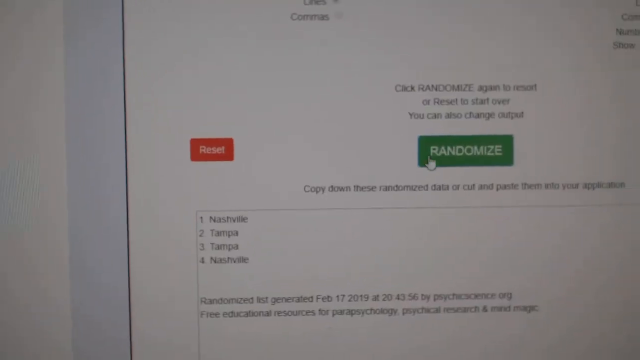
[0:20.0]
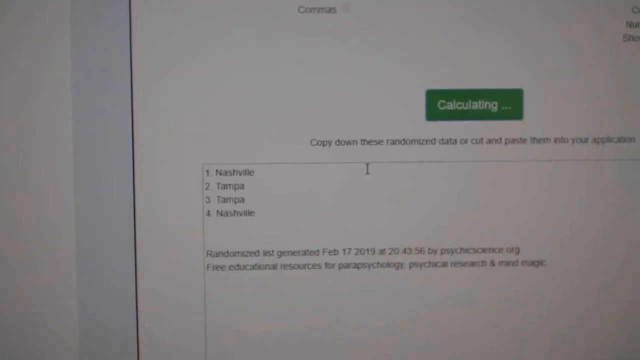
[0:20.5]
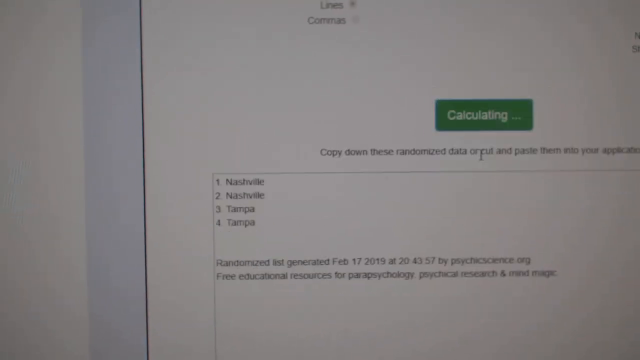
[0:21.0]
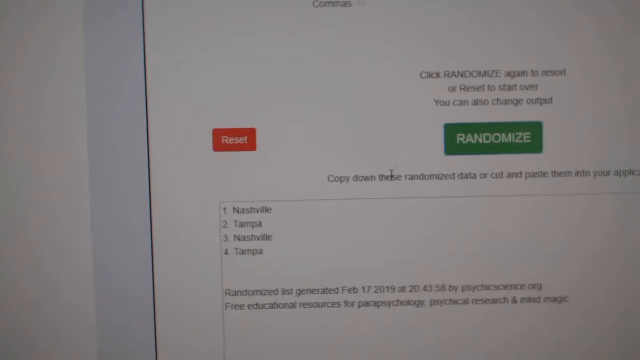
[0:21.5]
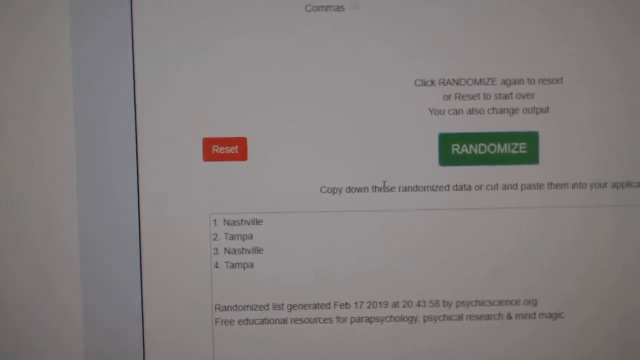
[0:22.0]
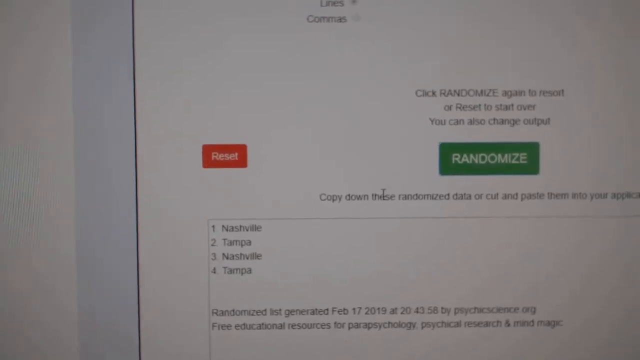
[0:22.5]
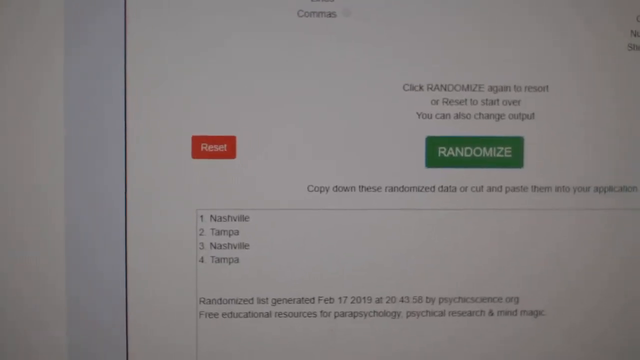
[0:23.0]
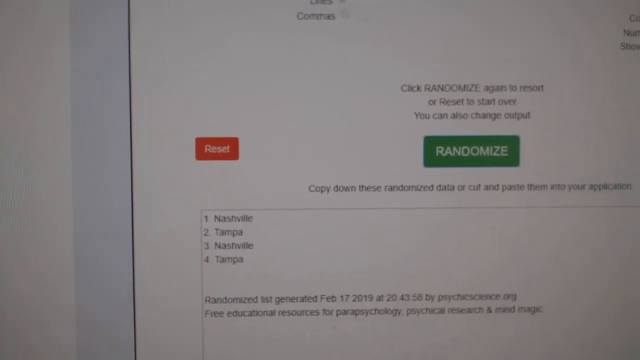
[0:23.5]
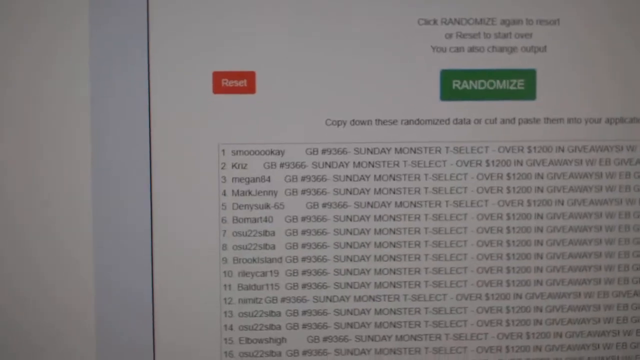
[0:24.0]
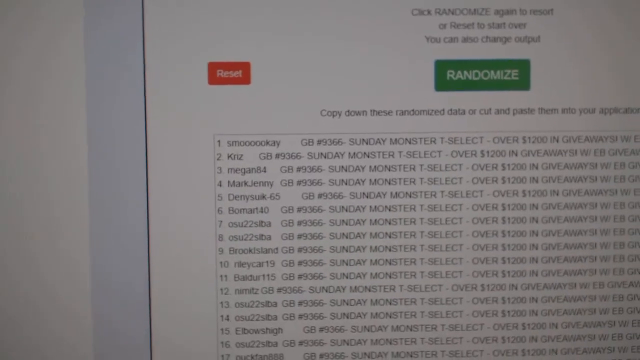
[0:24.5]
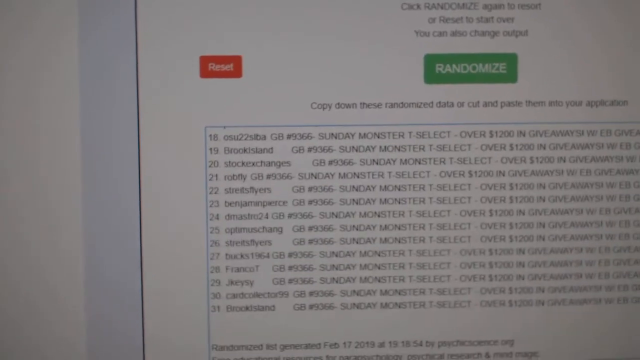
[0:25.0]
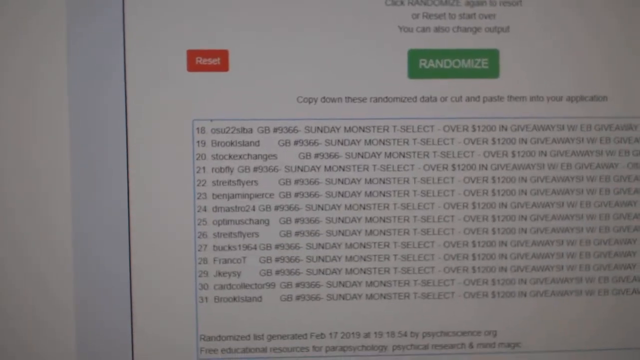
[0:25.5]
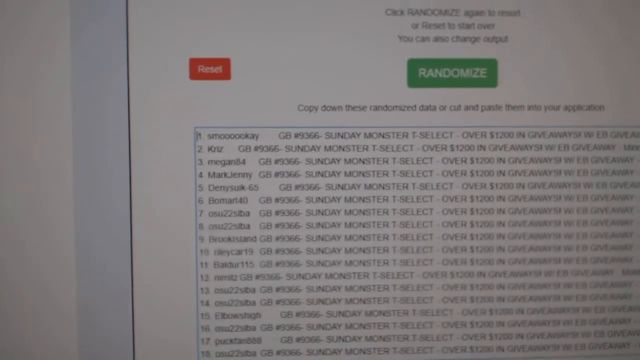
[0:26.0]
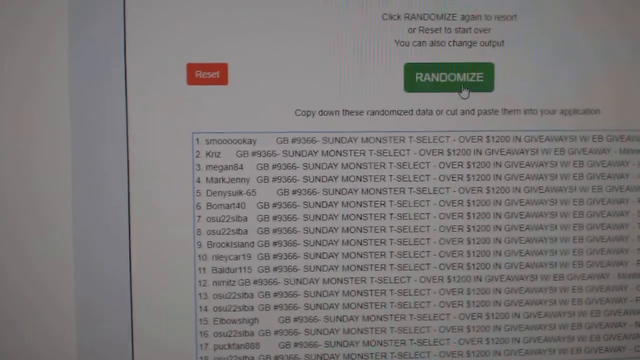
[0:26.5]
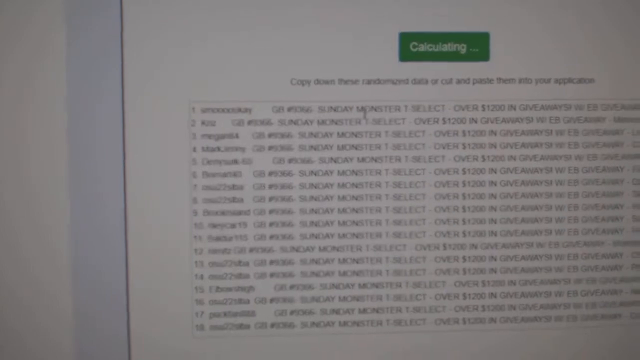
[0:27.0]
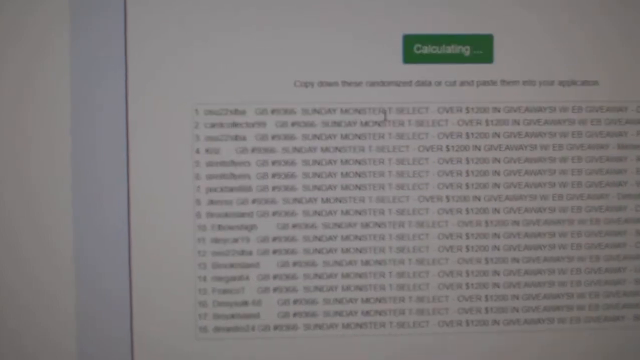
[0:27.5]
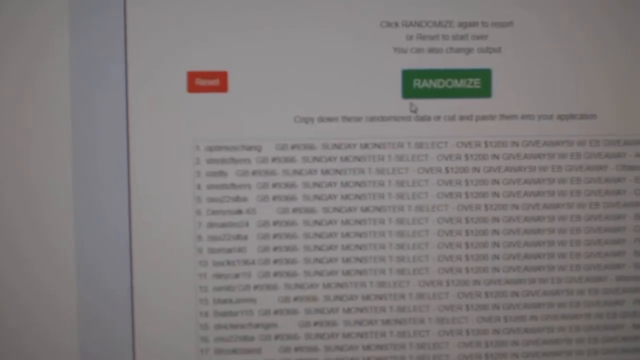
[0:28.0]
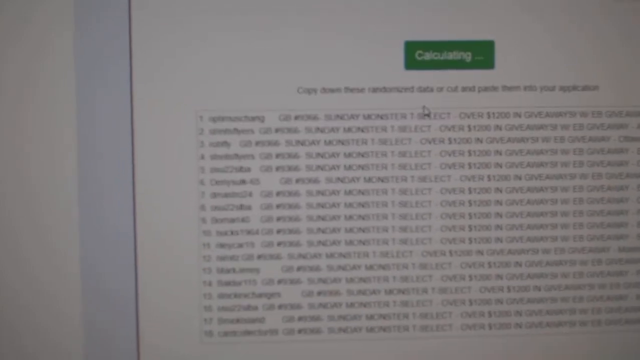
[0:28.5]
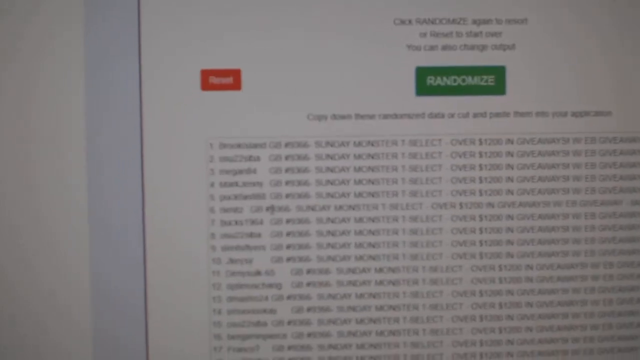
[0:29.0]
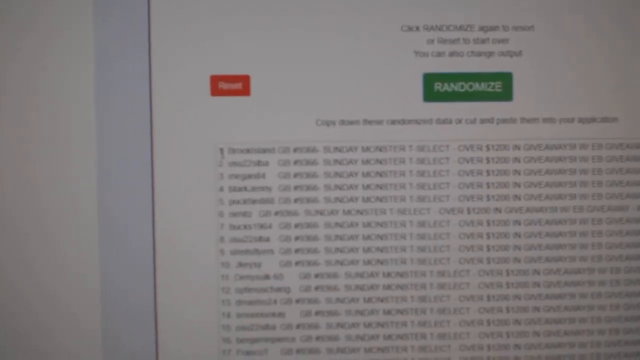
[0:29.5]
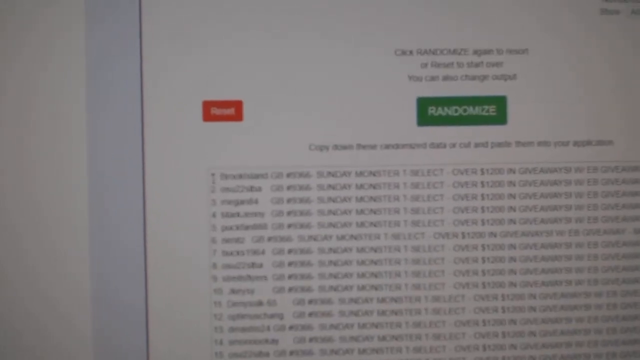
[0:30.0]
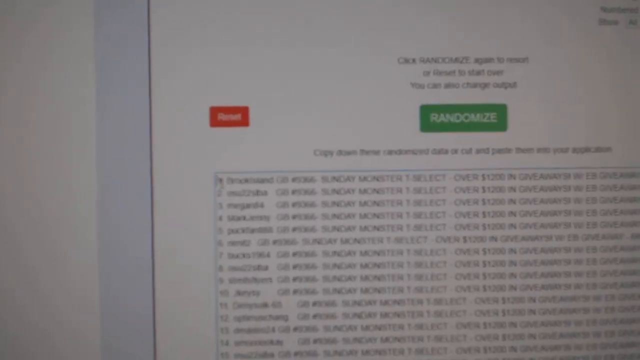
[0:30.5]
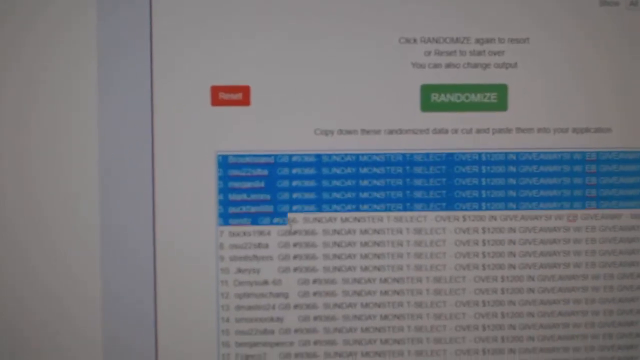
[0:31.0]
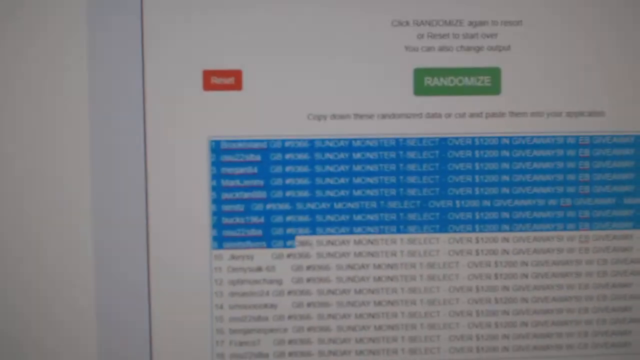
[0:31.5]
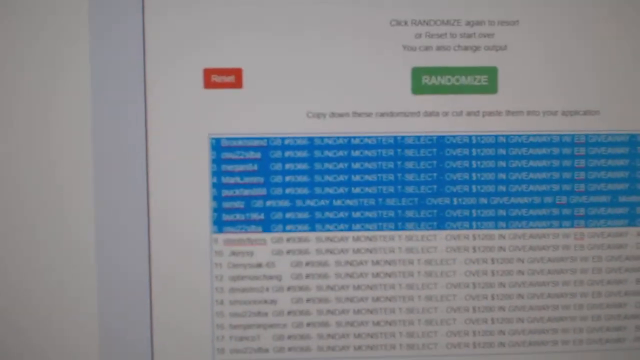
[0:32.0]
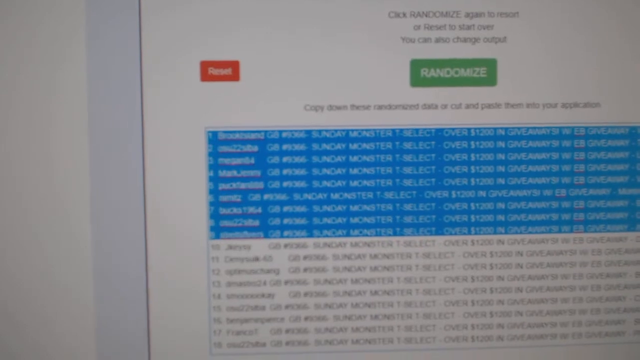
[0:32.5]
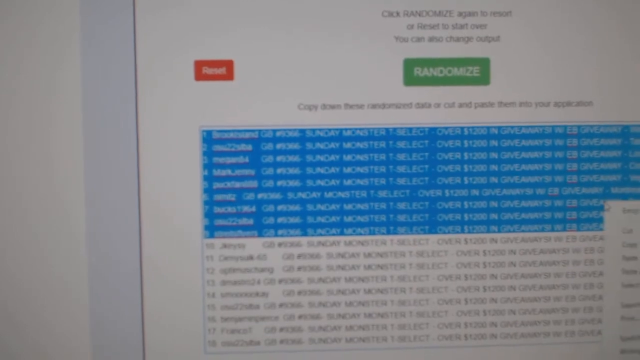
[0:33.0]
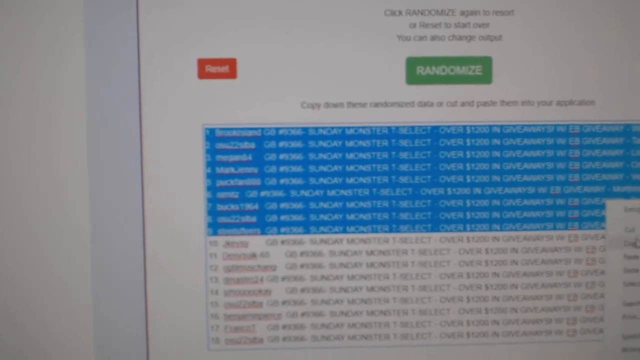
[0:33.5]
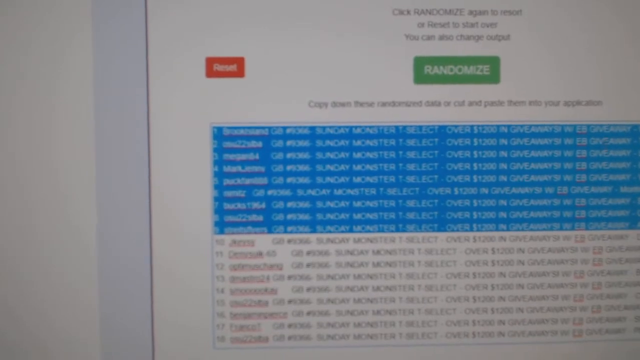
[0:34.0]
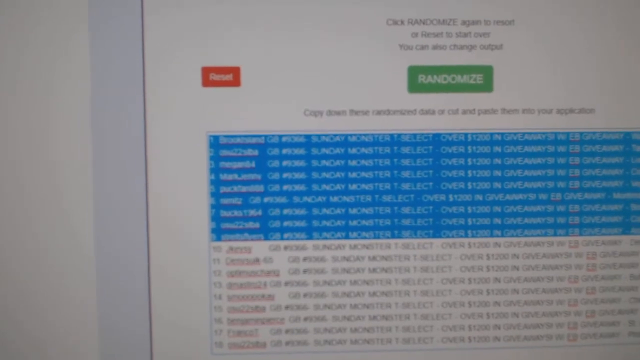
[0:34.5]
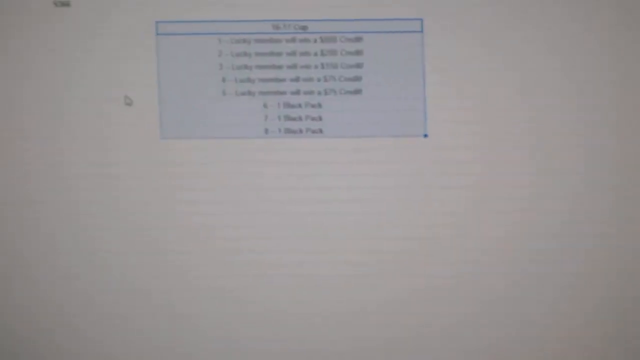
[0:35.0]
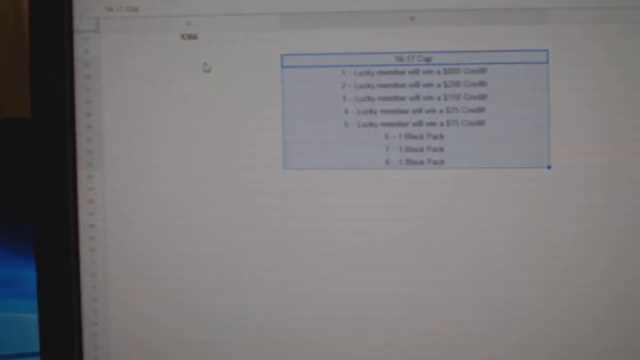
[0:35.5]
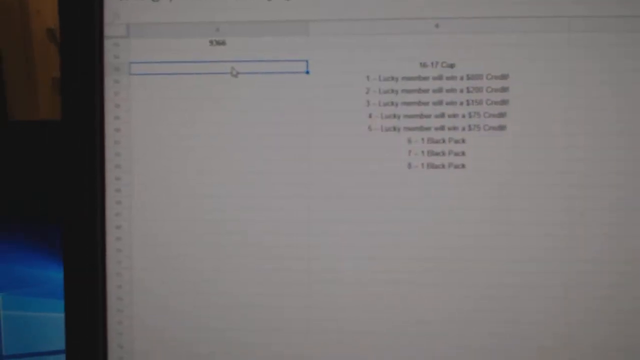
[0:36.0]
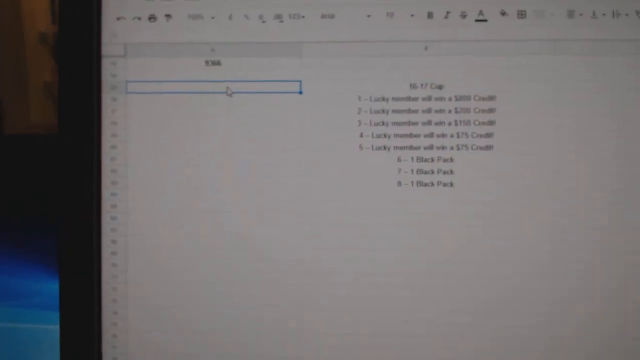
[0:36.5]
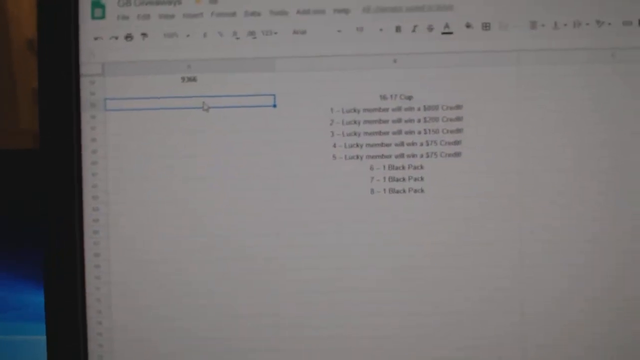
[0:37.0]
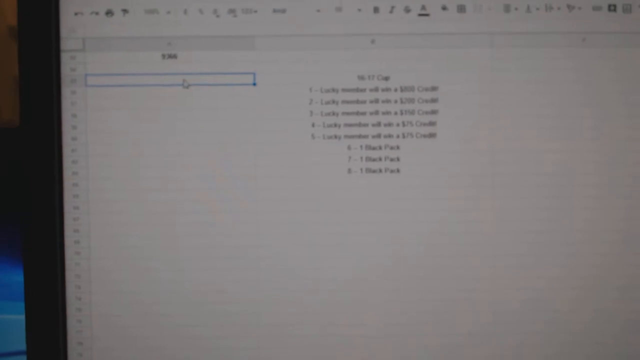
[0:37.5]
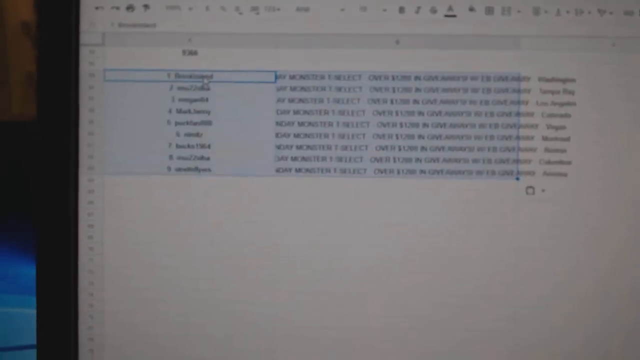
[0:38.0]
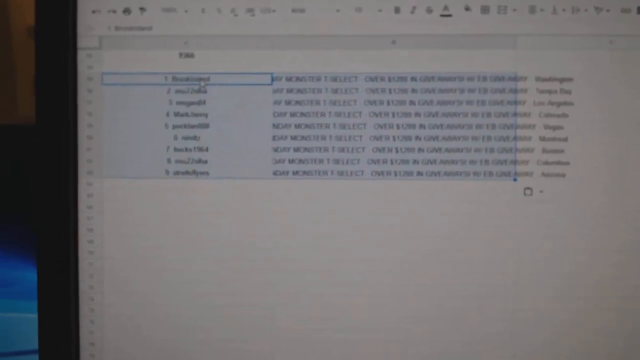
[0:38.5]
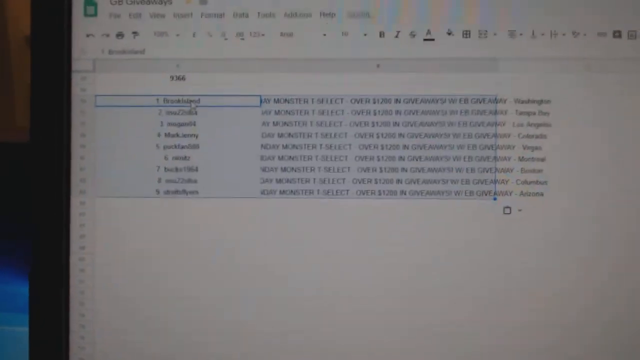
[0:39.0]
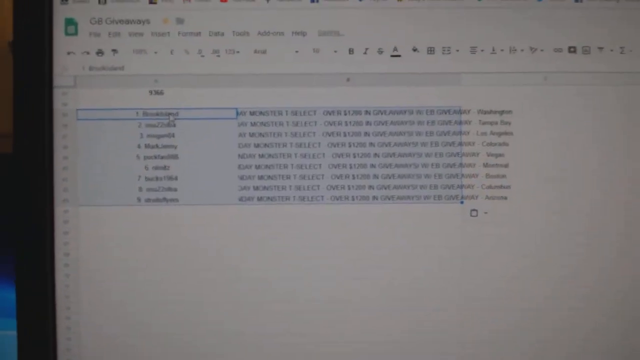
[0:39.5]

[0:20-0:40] The user keeps hitting the randomize button, and the Nashville and Tampa values continue to change order. After a few seconds a completely different list appears with an unspecified number of options. It is cut off in the recording, but each row apparently holds multiple values, since there is a lot of white space between some of the words. They scroll all the way down, go back up, and hit randomize a few more times. They then highlight the first nine rows and right-click to copy them. Moving to an Excel or Google Sheets document, they paste the rows into the first column a few rows down. Once pasted, the values after the white space appear in the next column over, so the first column shows only the number and the first value.